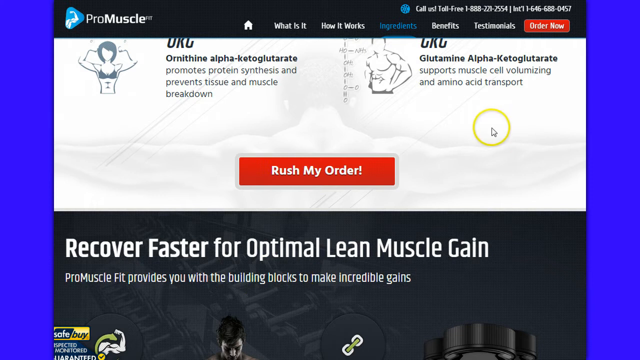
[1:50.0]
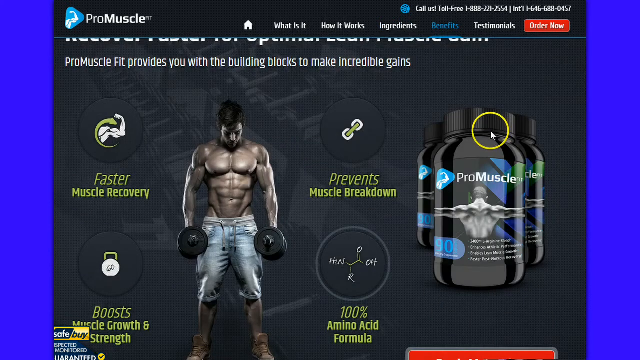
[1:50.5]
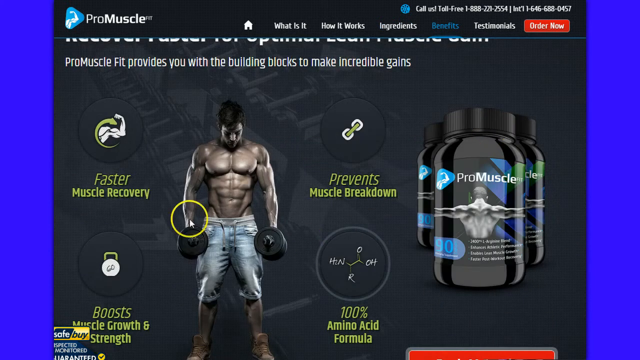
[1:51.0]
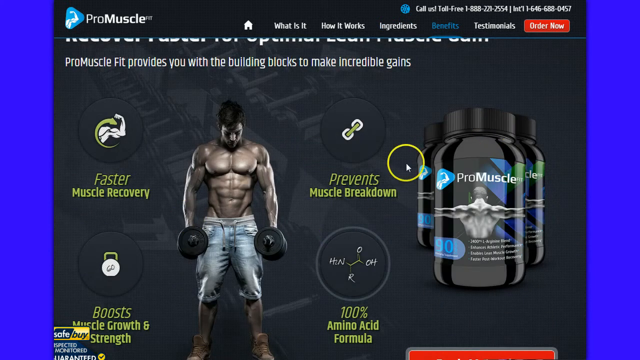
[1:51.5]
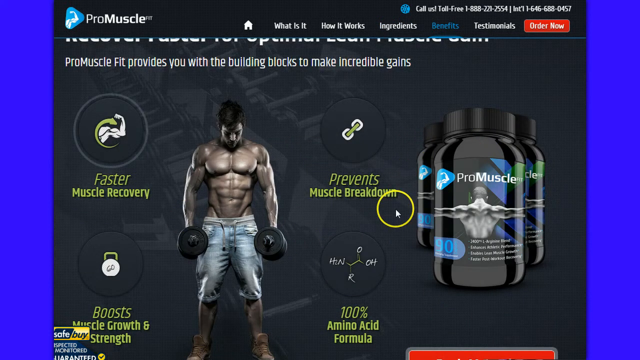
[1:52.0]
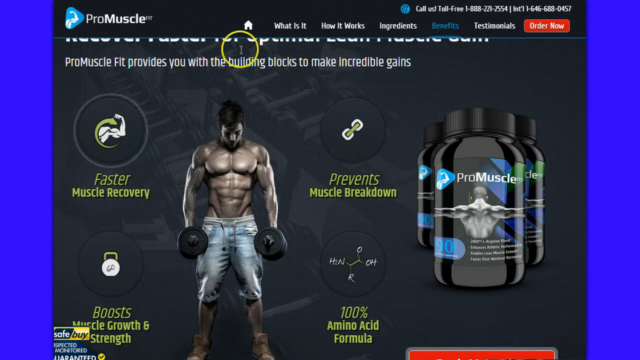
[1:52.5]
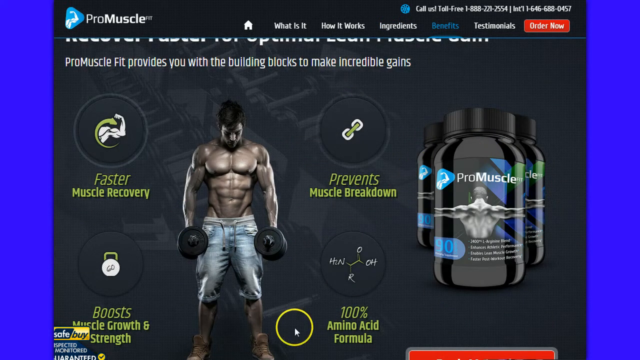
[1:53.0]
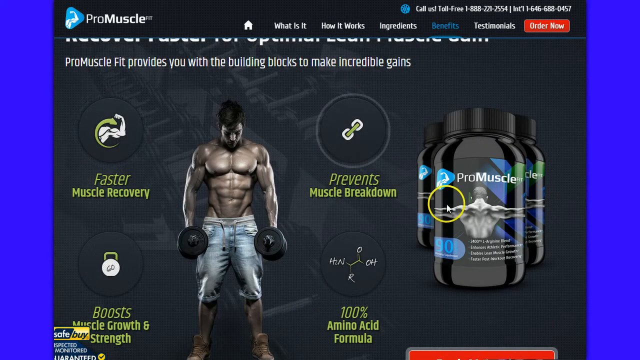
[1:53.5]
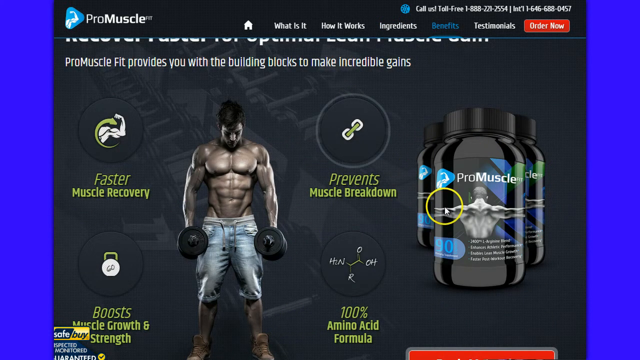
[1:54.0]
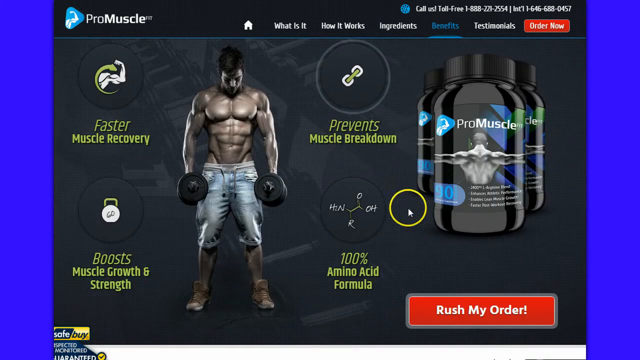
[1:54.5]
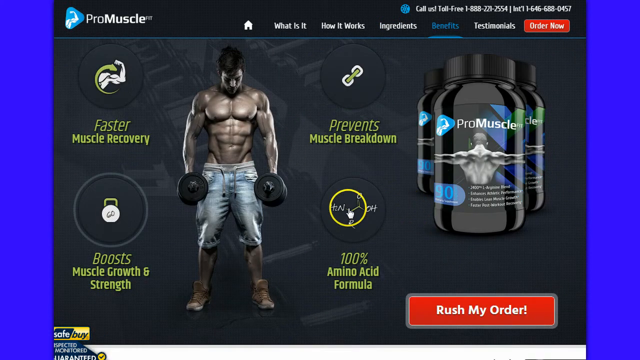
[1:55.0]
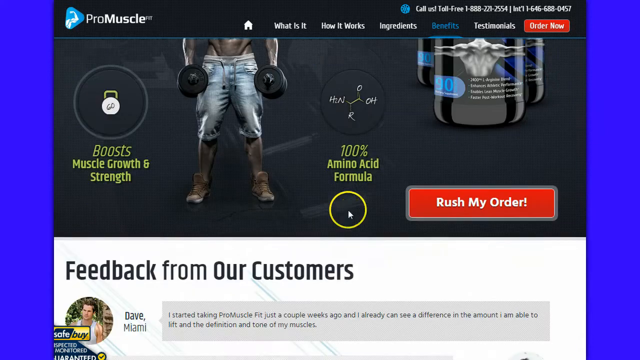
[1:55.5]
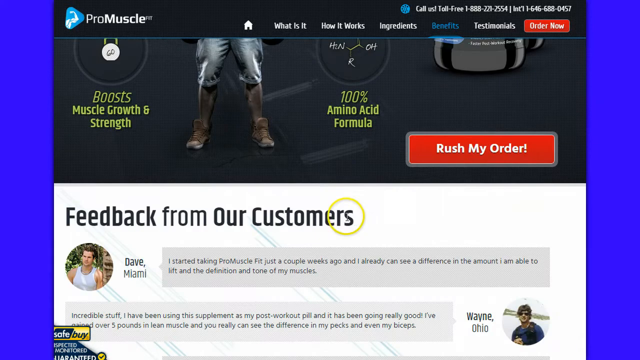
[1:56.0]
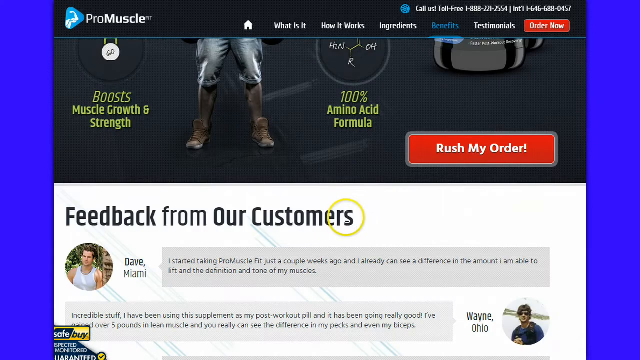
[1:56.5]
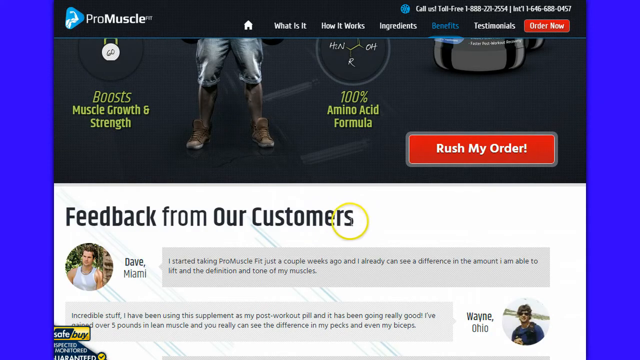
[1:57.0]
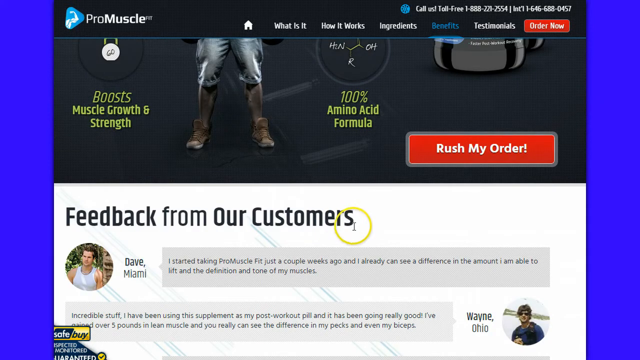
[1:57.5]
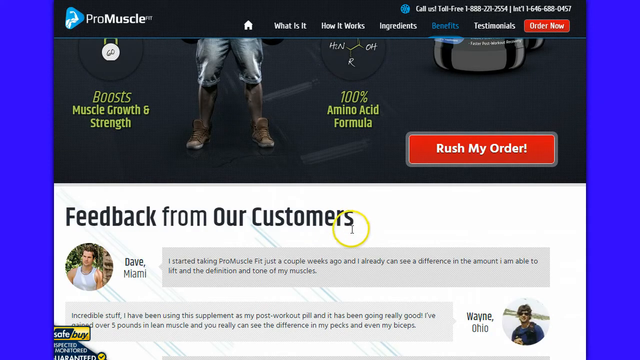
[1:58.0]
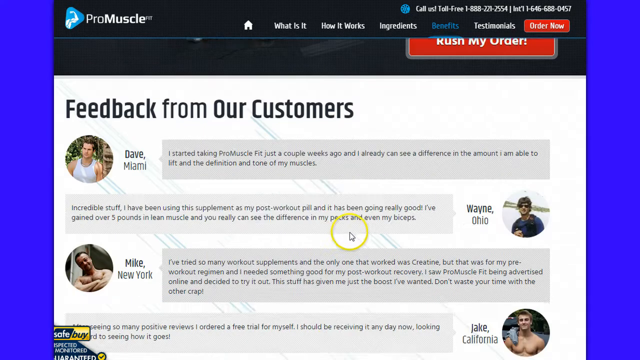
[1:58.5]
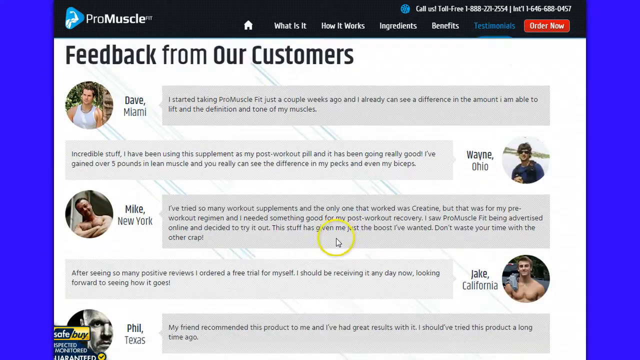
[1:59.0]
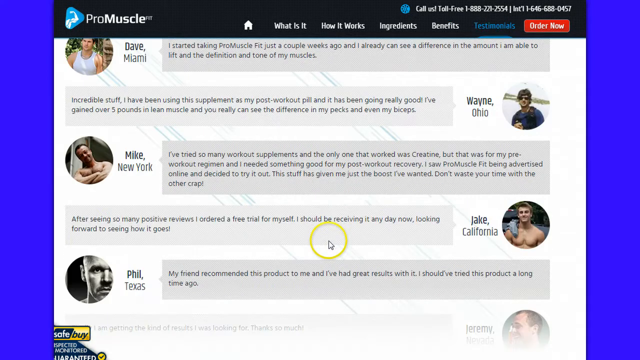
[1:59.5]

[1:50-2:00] The ProMuscle ad is on the computer screen. After the page scrolls down, a section says "recover faster for optimal lean muscle gain." The page shows faster muscle recovery and that the product prevents muscle breakdown. Further down is an area that says "feedback from our customers." Scrolling continues, and the text reads "faster, recover faster for optimal lean muscle gain." That area also says "ProMuscle Fit provides you with the building blocks to make incredible gains." Toward the top are some pictures of lean muscle drawings.